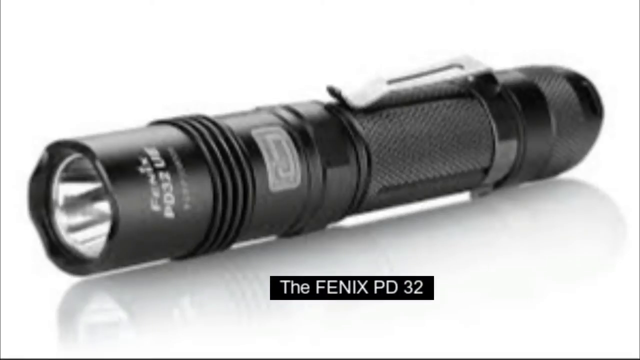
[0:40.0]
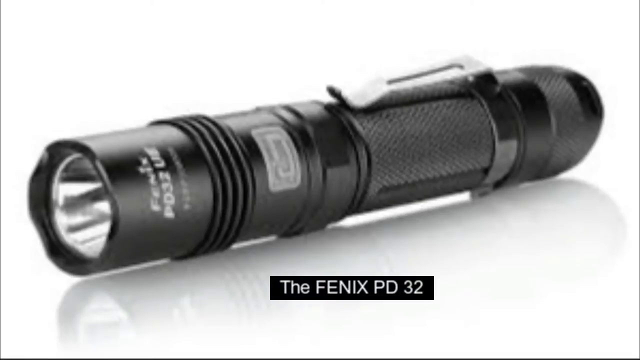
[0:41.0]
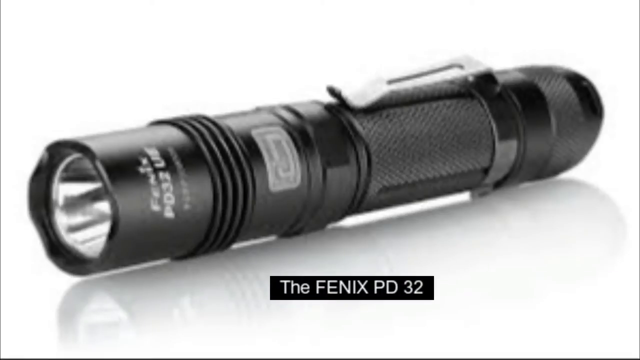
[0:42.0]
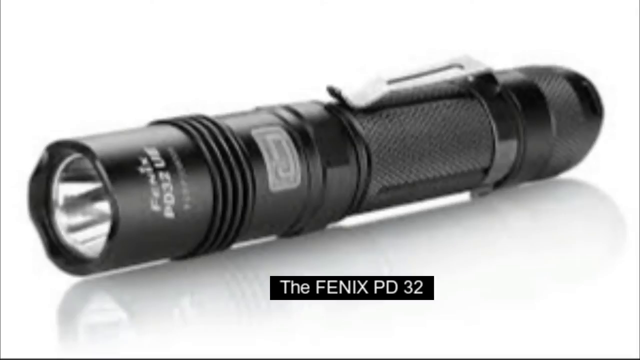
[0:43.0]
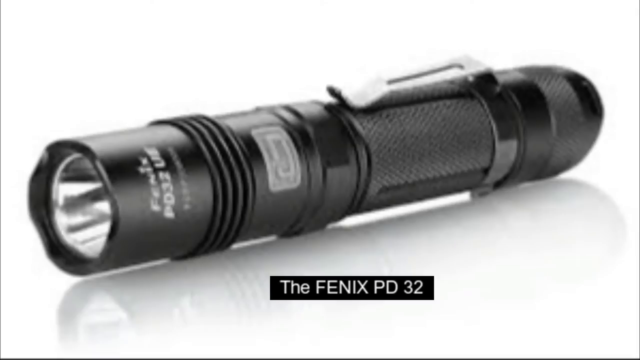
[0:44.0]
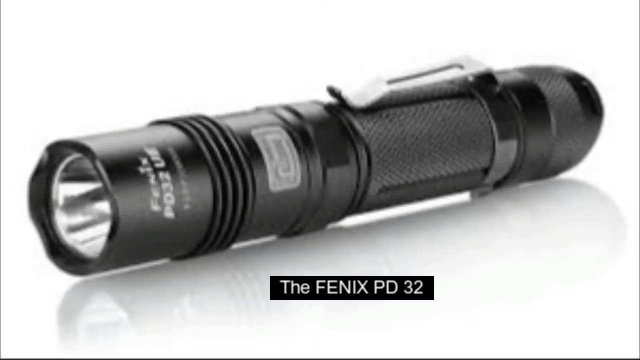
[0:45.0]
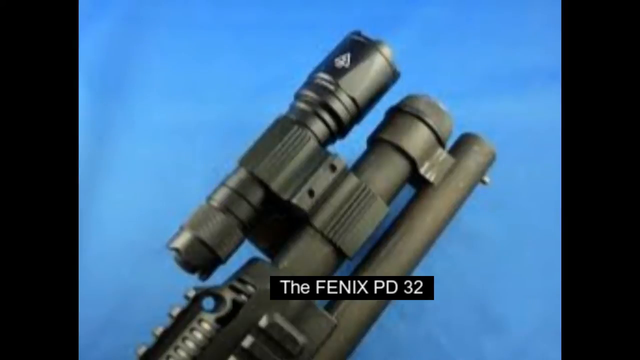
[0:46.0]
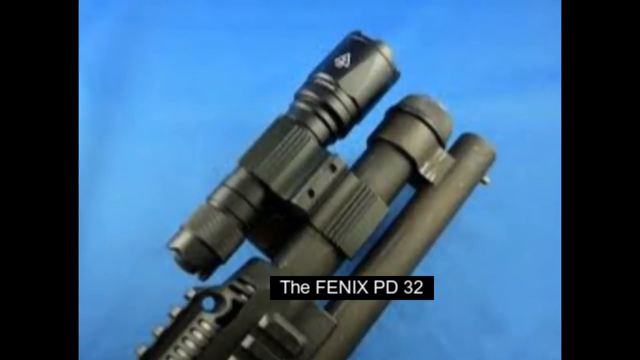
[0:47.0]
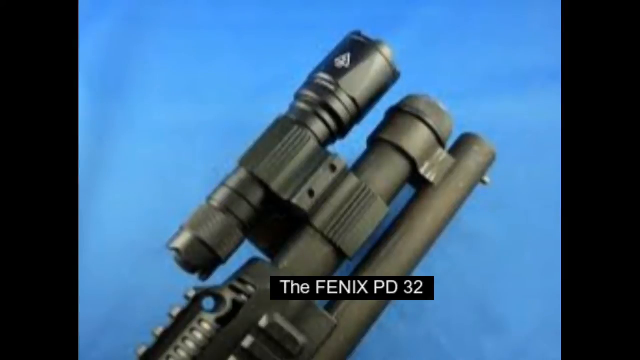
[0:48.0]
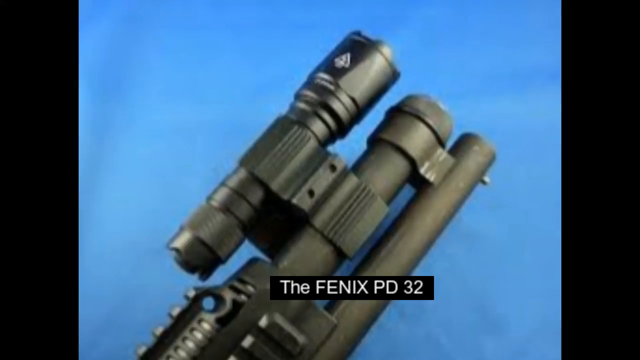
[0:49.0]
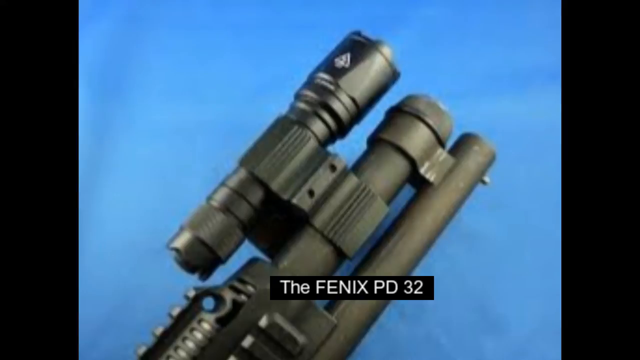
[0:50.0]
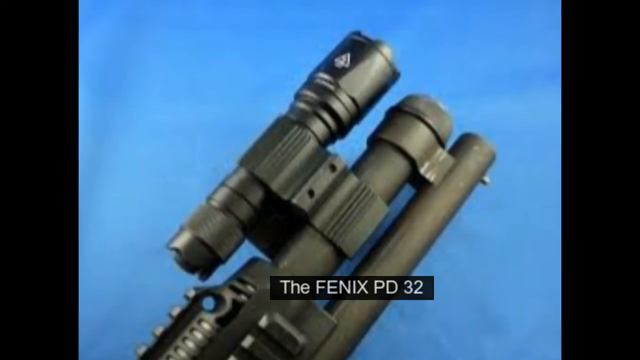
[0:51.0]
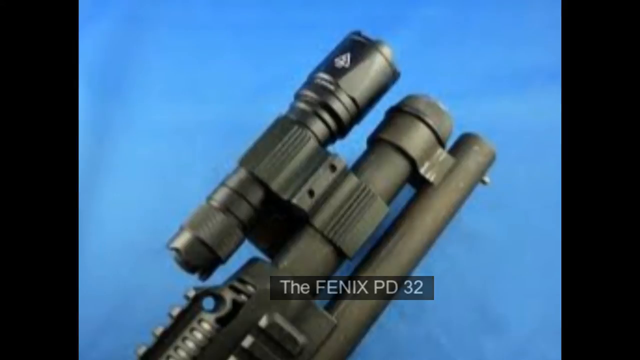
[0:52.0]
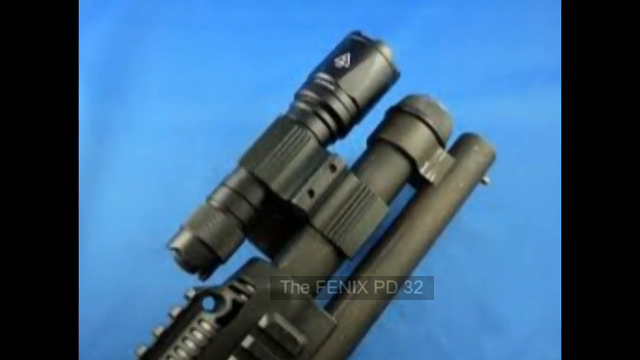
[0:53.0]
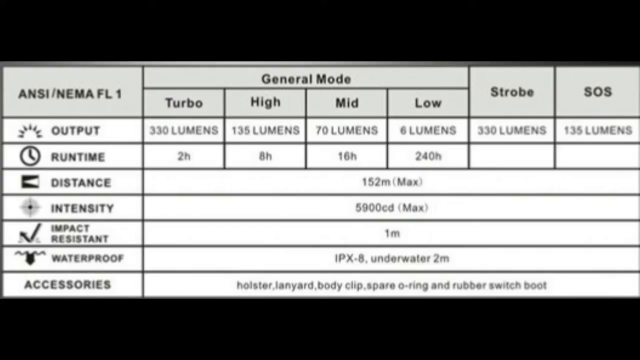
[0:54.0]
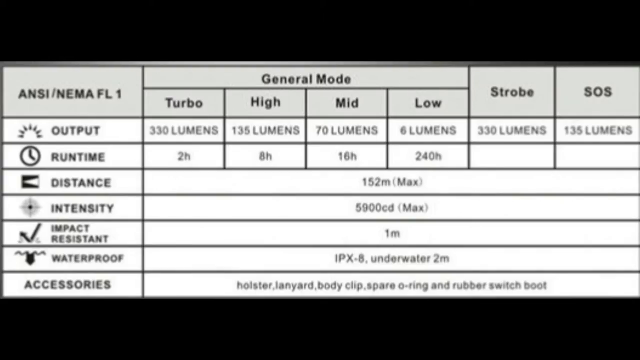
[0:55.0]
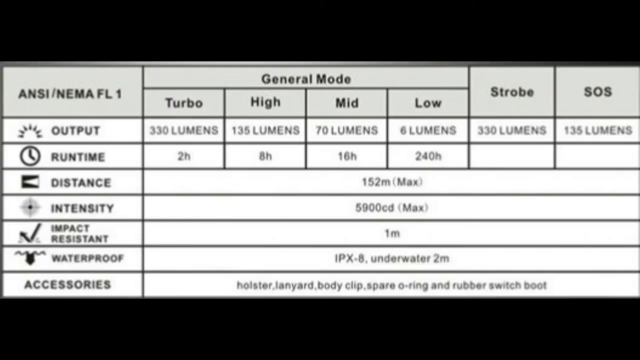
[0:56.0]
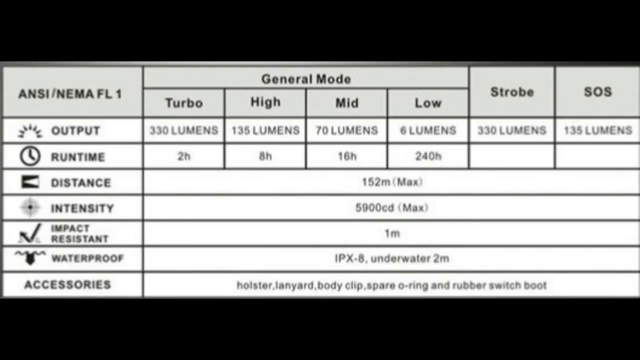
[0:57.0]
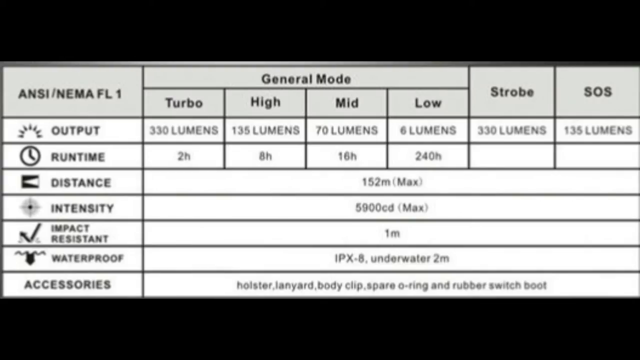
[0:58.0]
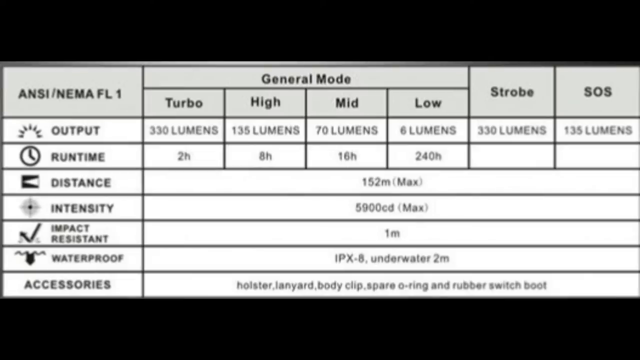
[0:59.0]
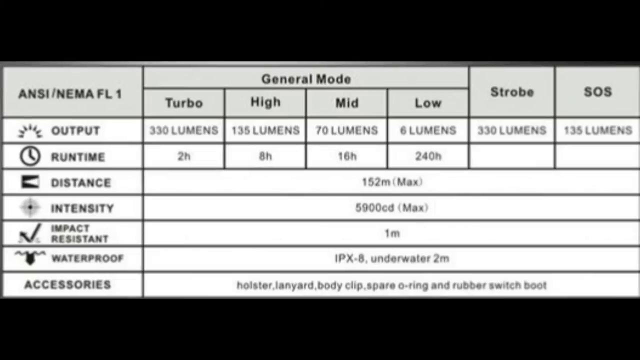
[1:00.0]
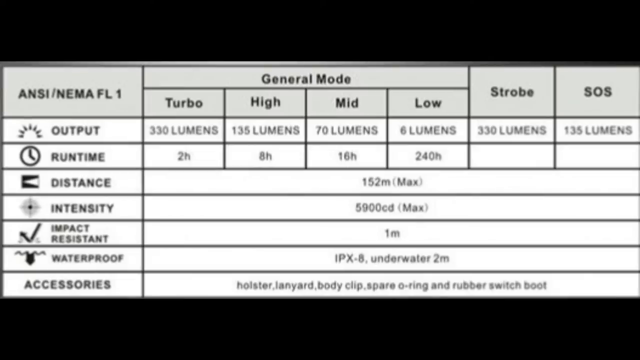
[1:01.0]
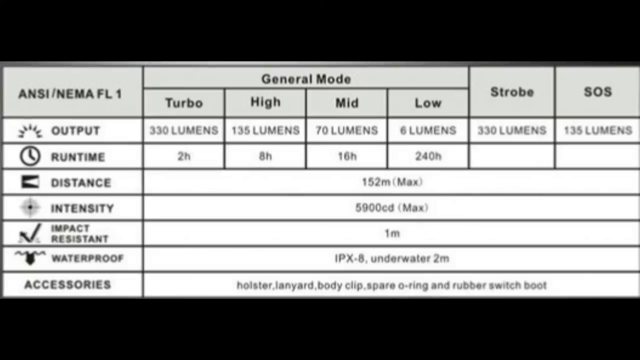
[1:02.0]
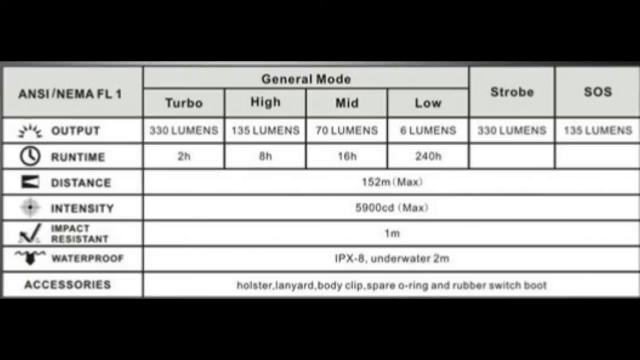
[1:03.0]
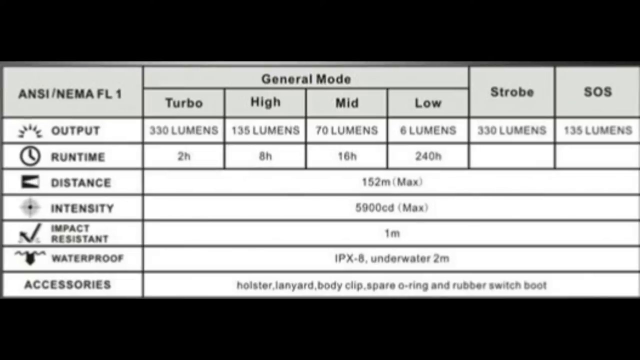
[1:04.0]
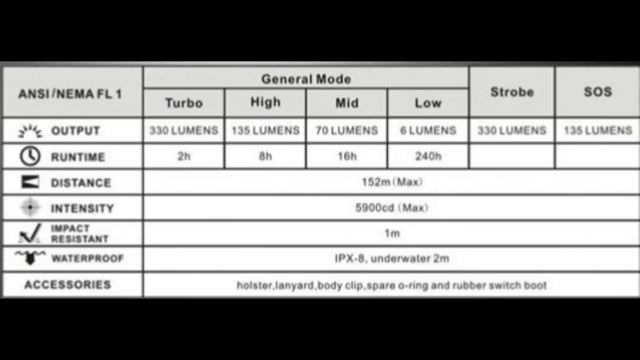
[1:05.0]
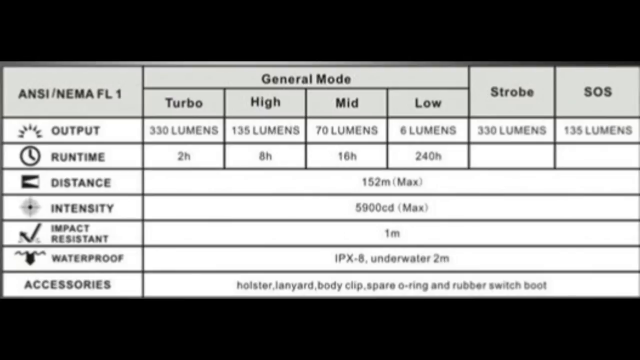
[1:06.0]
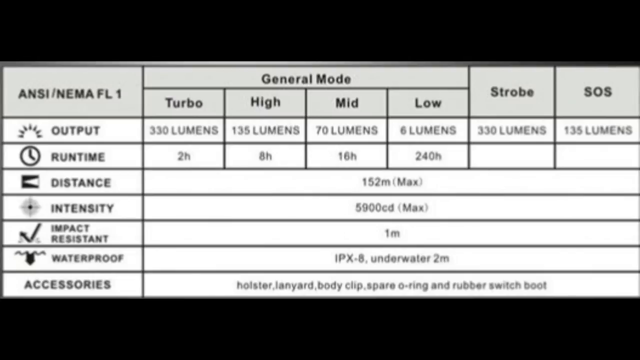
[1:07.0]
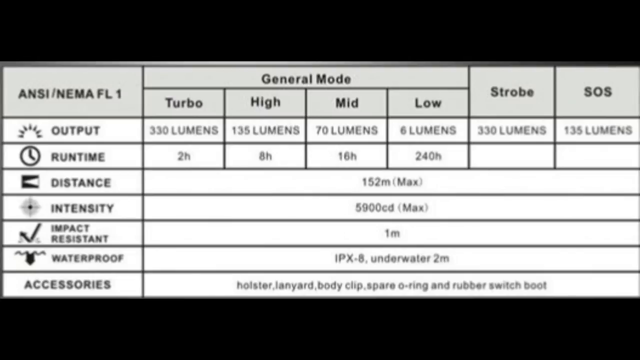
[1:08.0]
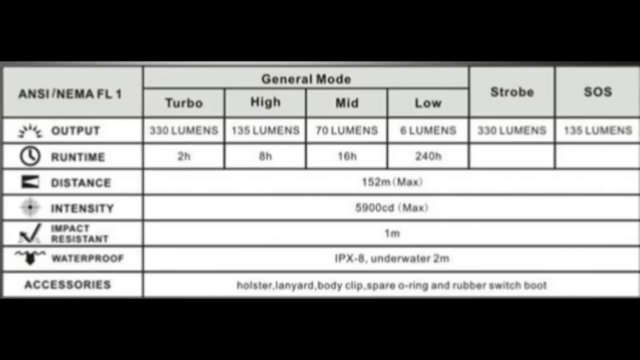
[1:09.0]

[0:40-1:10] A close-up shows a black device that looks like a small flashlight. It has a metal clip that looks like the clip on a pen, and near the end with a lens there is white writing on its side. It rests on a white surface against an entirely white background. Below it, in a black text box, are the words "The FENIX PD32." The image then changes to what looks like the muzzle of a gun: three metal pipes connected together that look almost like a heavy piece of artillery. The metal is greenish-gray and the background is blue, and the Fenix PD-32 label is still at the bottom of the screen. A chart follows: on the left, a column lists categories such as Output, Runtime, Distance, Intensity, Impact Resistant, Waterproof, and Accessories, and on the right are the specifications for each category in corresponding rows.